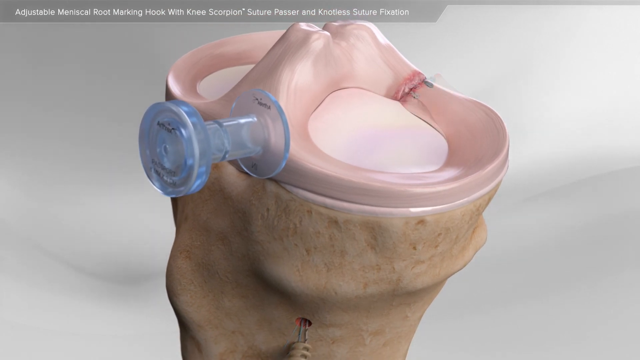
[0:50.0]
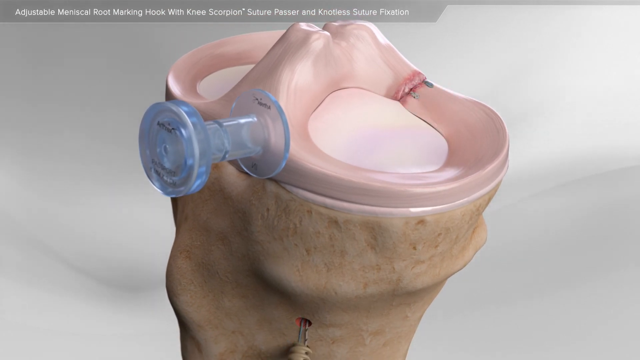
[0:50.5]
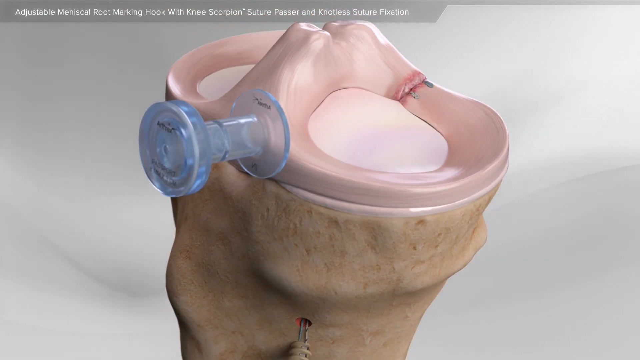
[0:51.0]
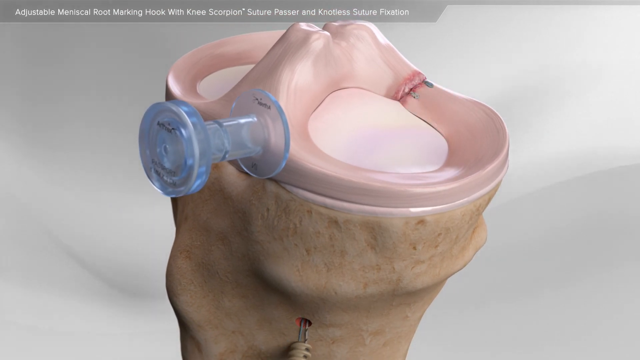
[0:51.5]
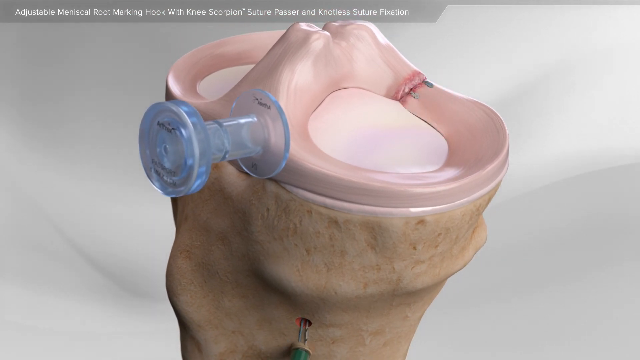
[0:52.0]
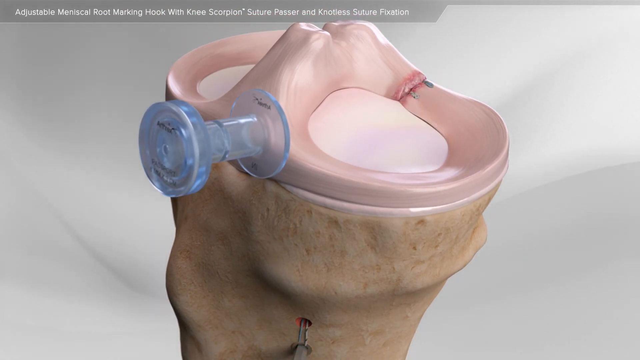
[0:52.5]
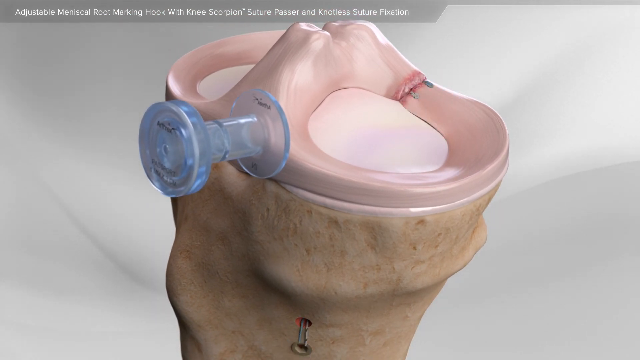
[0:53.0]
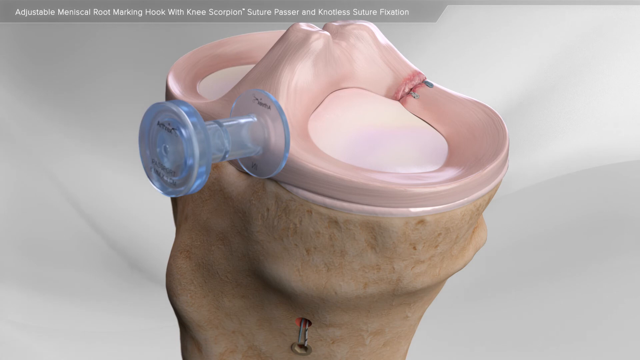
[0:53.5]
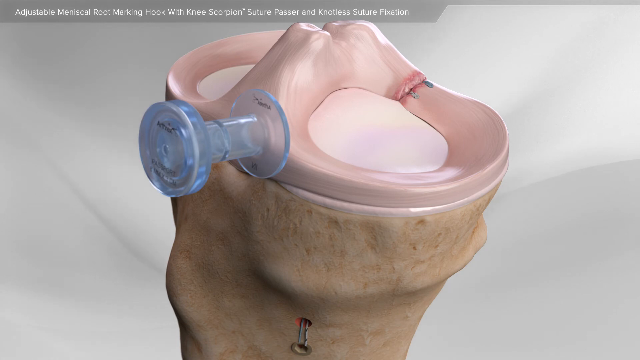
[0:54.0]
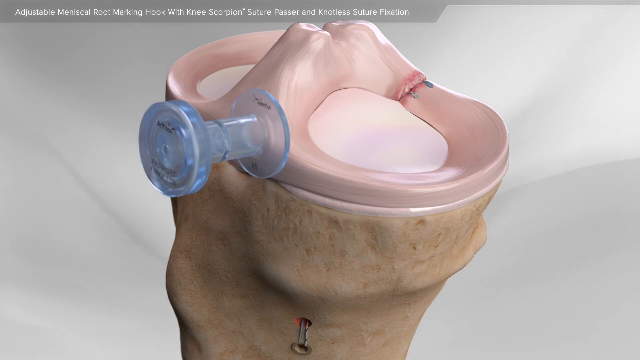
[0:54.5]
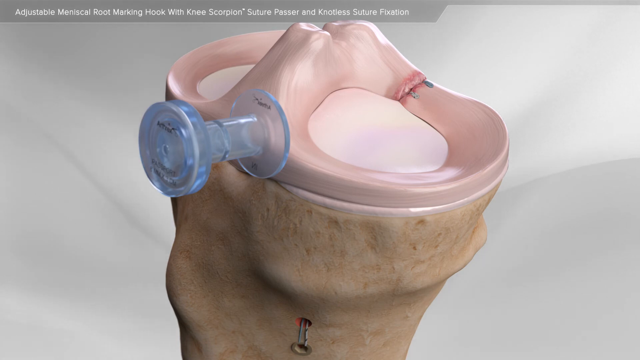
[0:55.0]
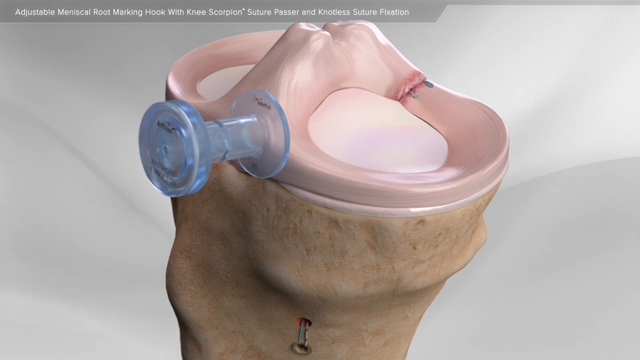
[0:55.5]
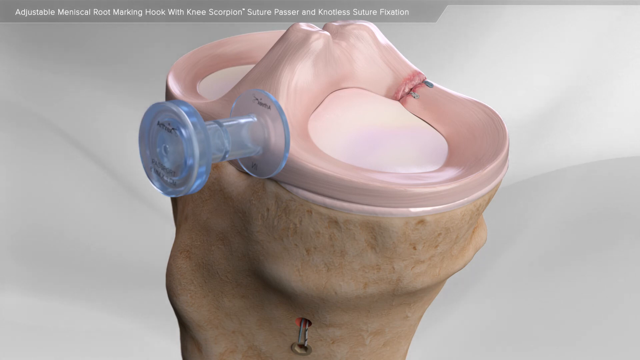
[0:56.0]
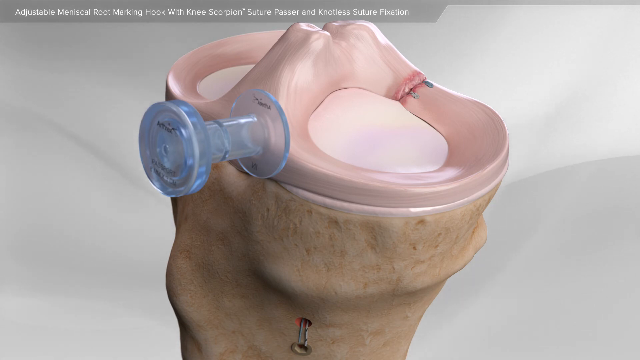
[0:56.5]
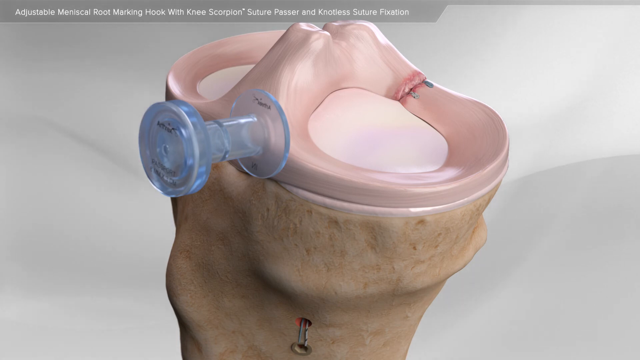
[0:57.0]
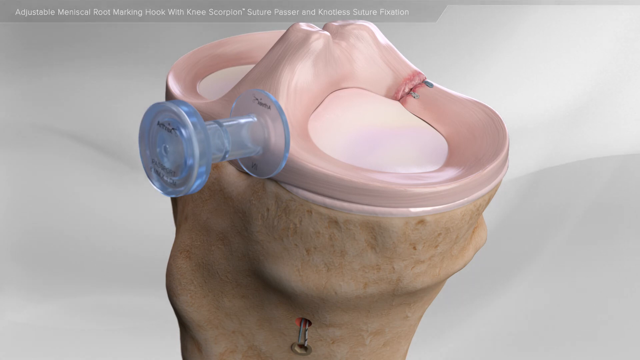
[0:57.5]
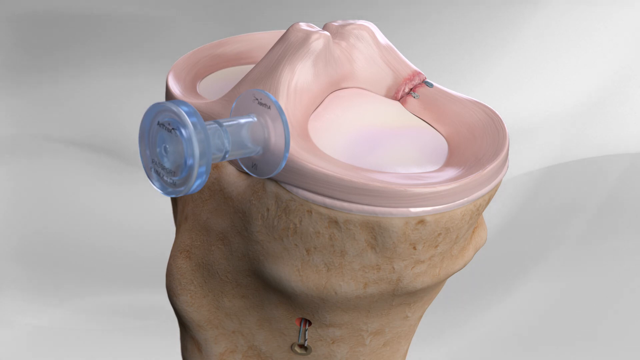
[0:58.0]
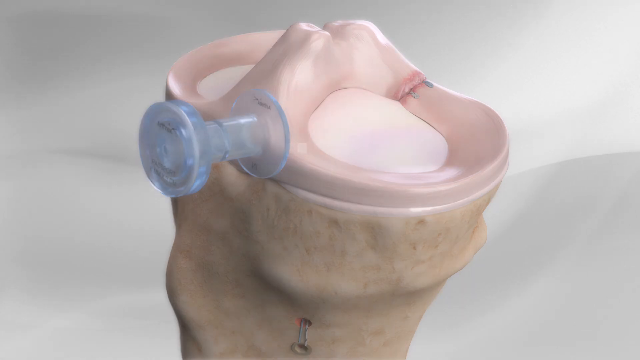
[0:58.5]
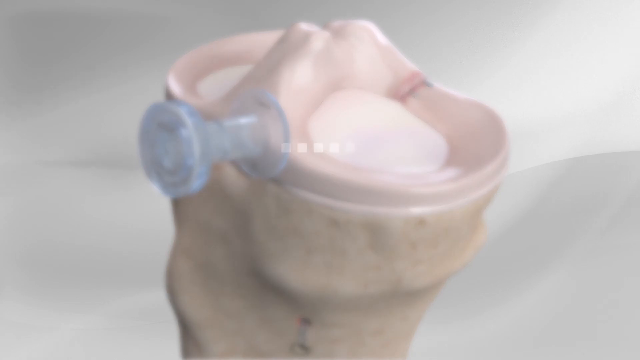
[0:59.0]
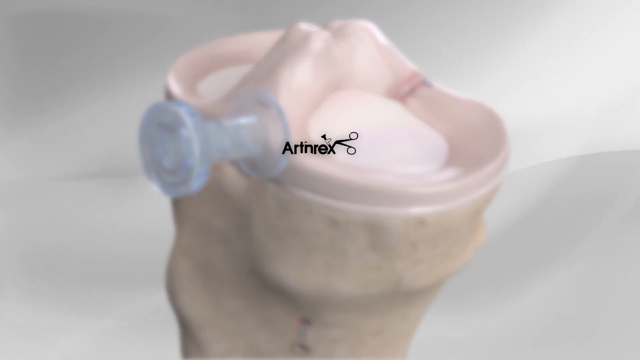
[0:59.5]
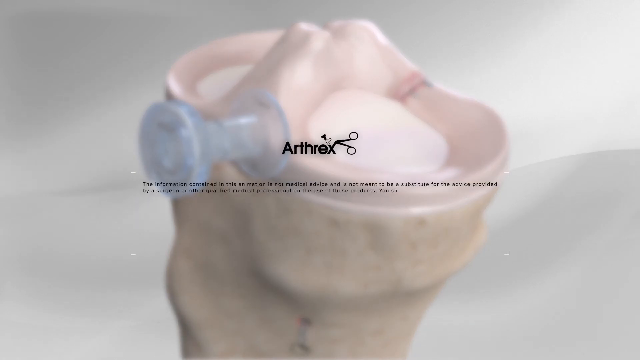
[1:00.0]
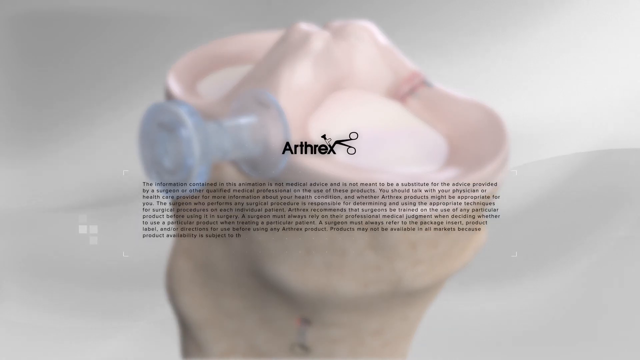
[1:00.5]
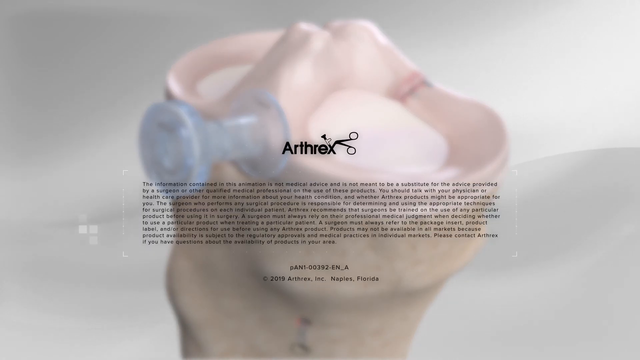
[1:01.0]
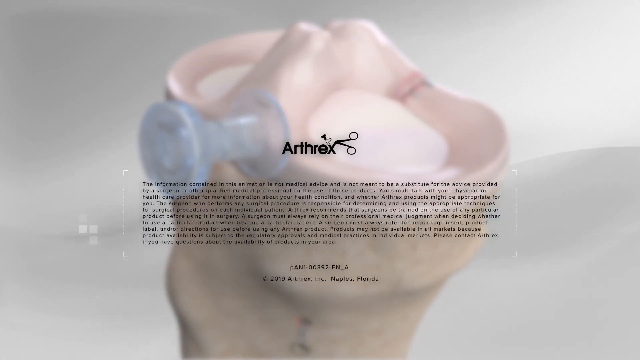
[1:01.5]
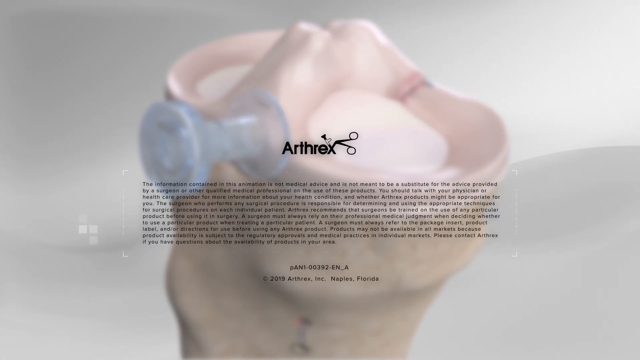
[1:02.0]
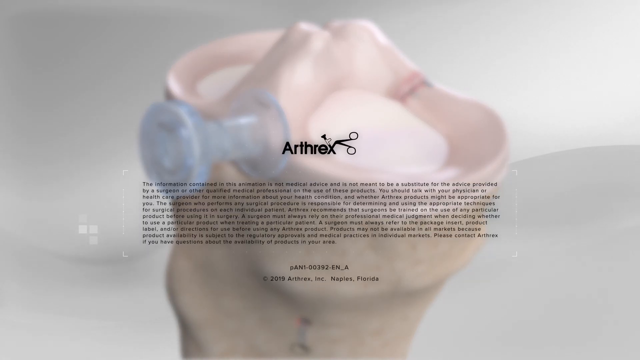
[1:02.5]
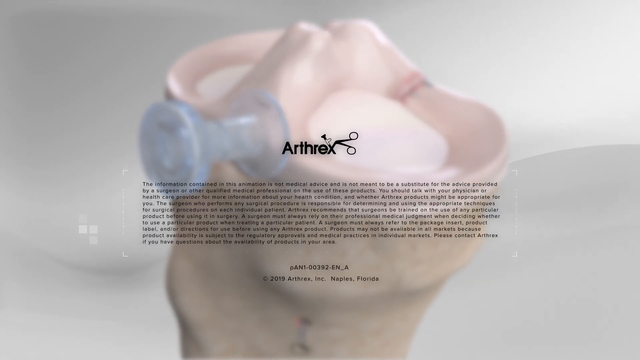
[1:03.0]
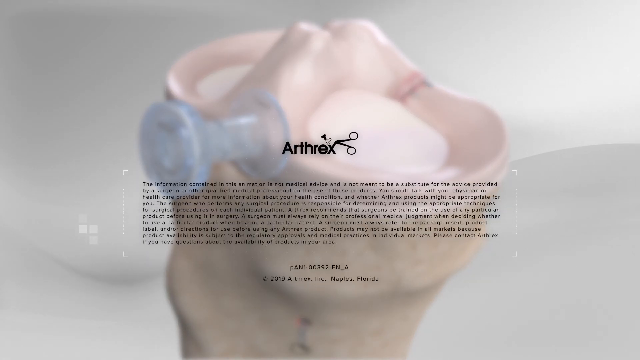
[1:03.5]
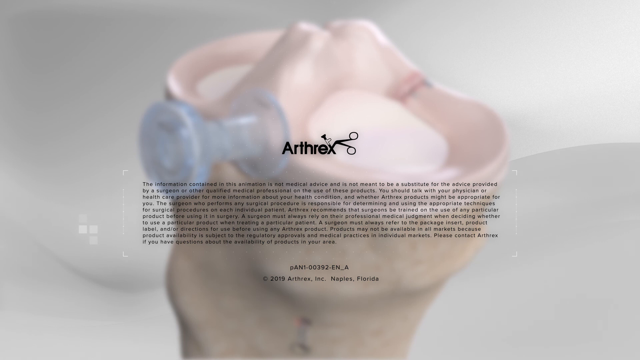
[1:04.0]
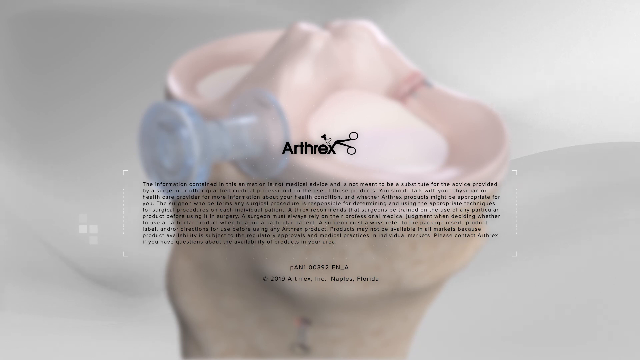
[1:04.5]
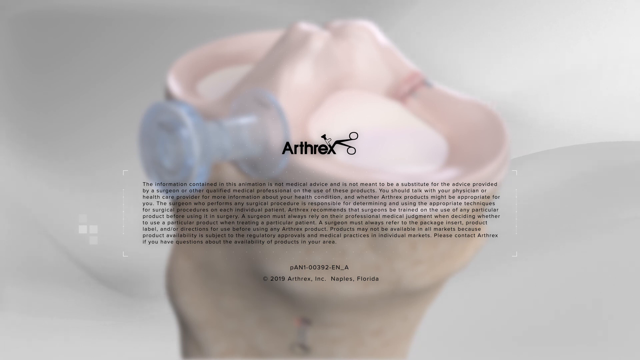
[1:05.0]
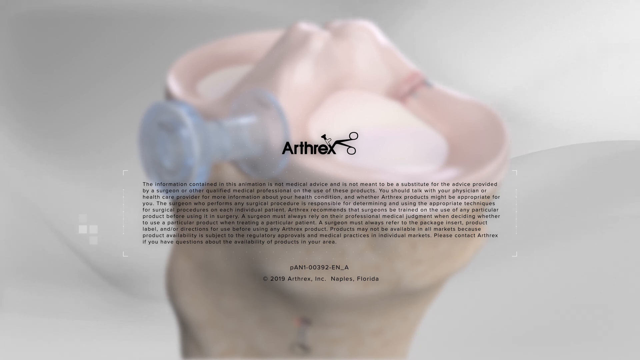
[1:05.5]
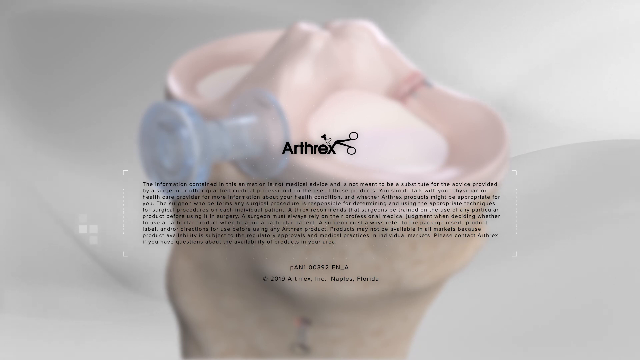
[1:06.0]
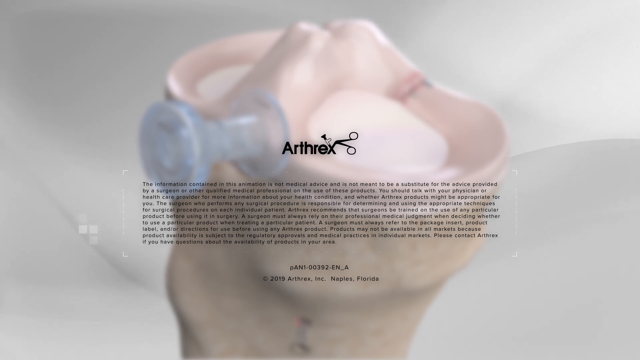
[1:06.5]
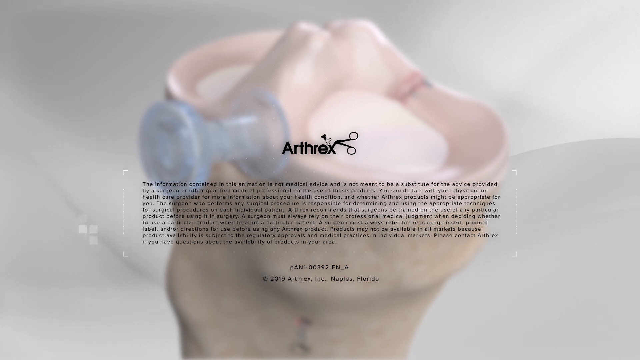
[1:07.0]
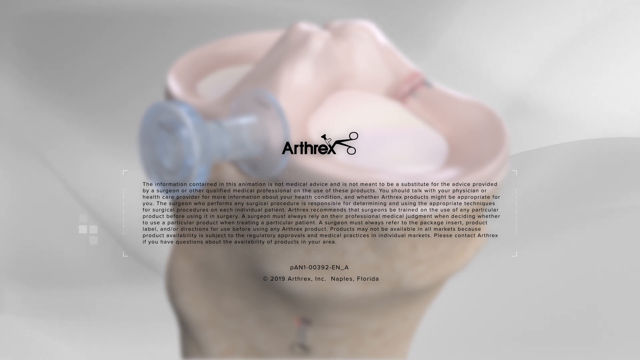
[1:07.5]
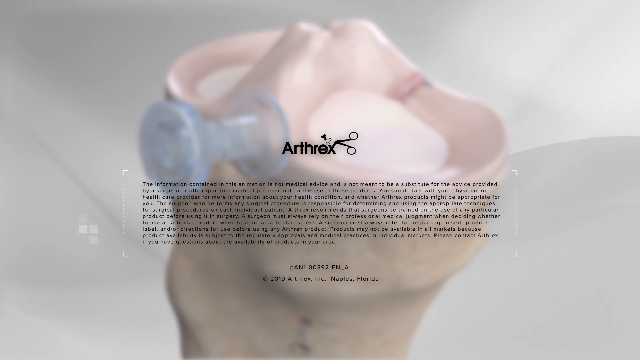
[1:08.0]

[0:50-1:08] The knee section shows the torn part now sort of formed up against the rest; it is still a bit pinkish and the damage is still visible. A faint white cover then appears with the text "Arthrex" at the top. The X at the end of the word has something like scissors on its upper right part, and its left part has a small knob and lock. A block of very small black text appears, seemingly some information, and at the bottom are credits reading "PAN1-00392-EN-A" and "copyright 2019, Arthrex Inc., Naples, Florida". The main short text above seems to state that this is an animation, not actual medical advice, and not a substitute for what to do if one suffers a similar injury.